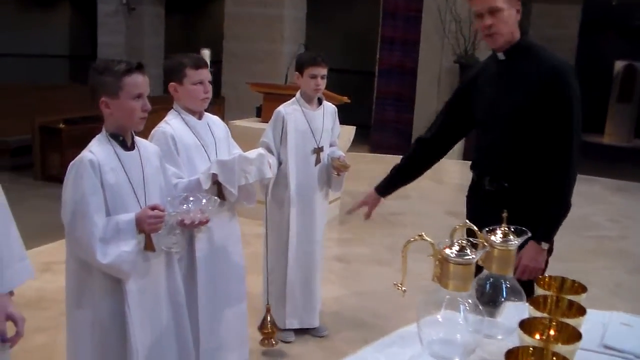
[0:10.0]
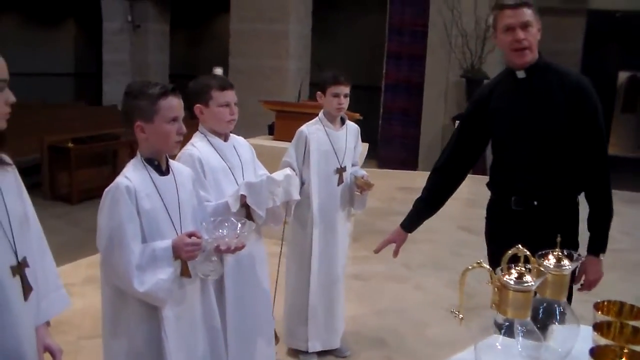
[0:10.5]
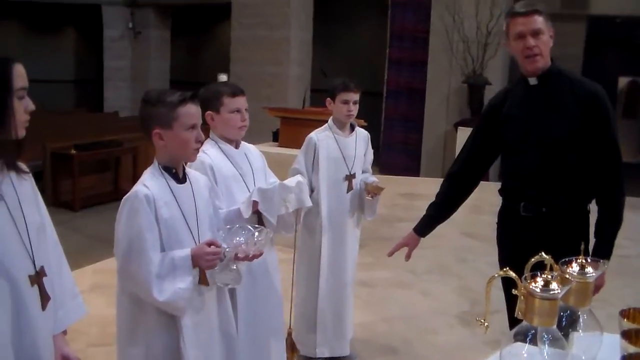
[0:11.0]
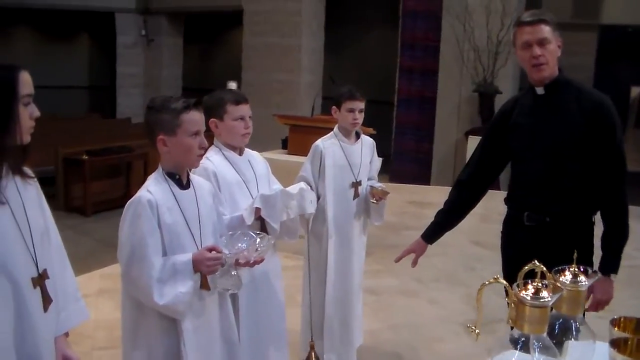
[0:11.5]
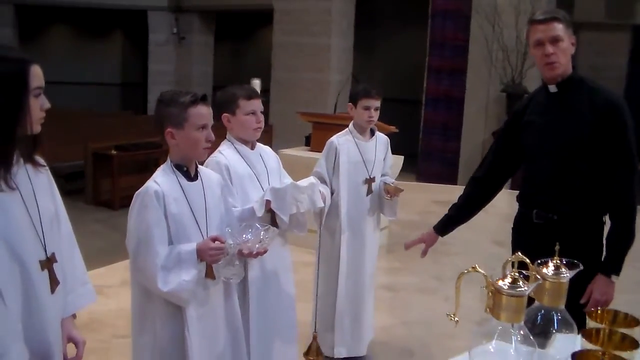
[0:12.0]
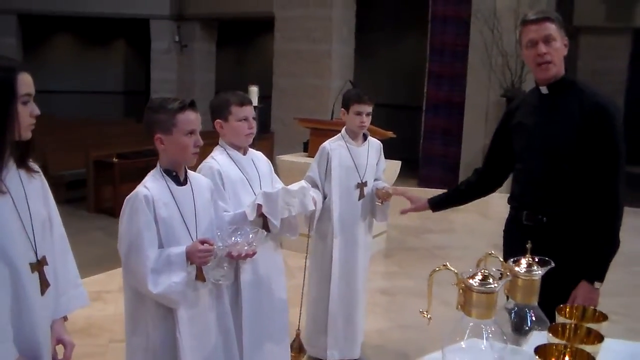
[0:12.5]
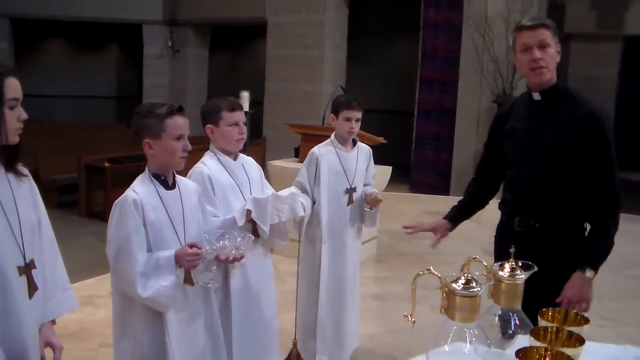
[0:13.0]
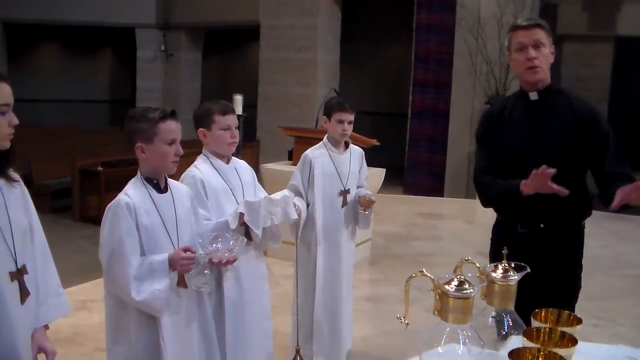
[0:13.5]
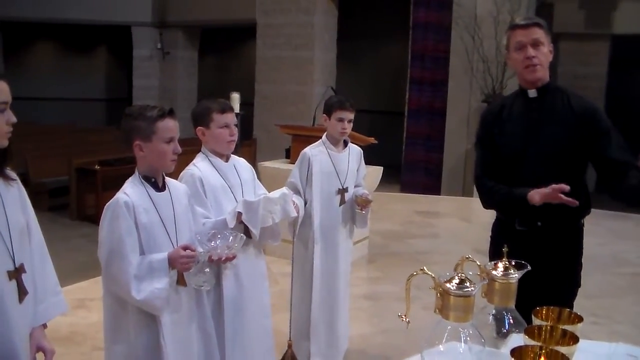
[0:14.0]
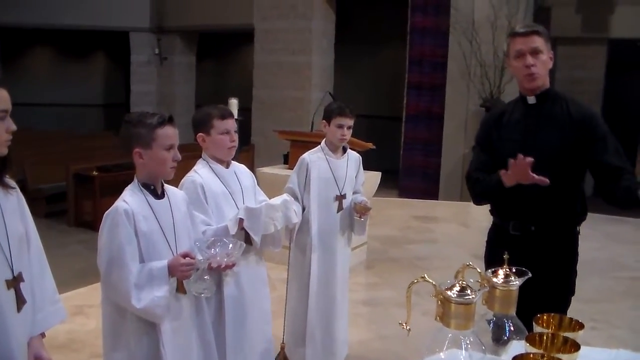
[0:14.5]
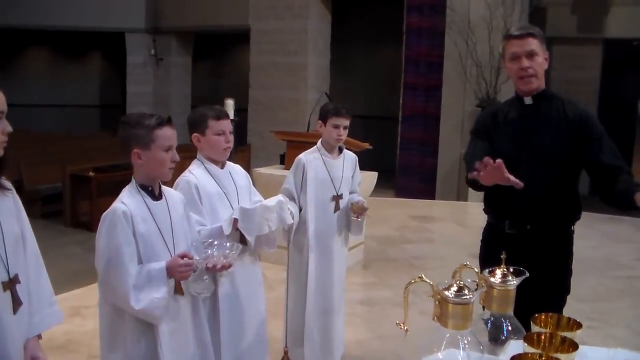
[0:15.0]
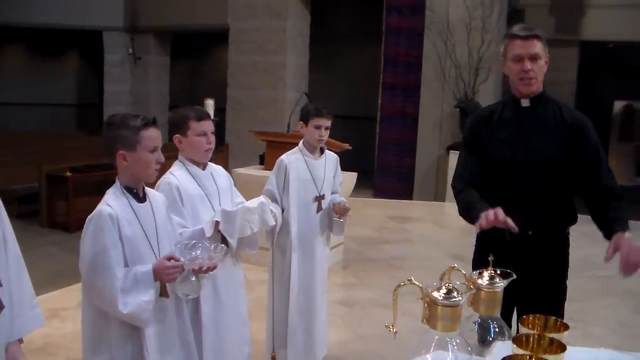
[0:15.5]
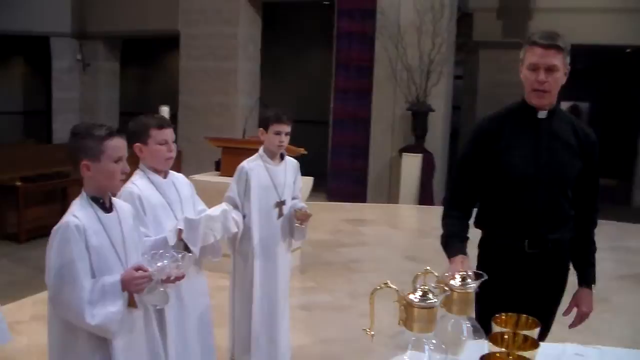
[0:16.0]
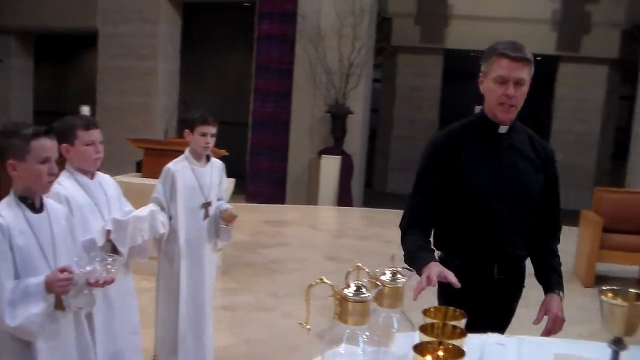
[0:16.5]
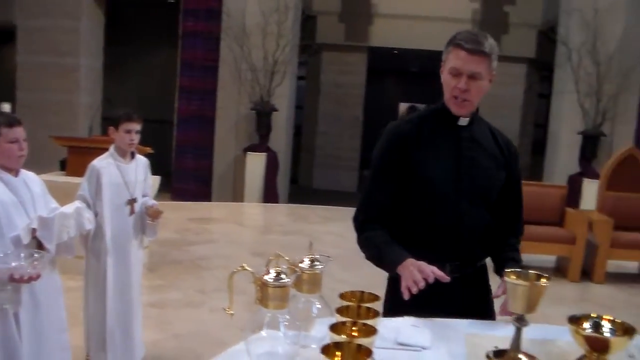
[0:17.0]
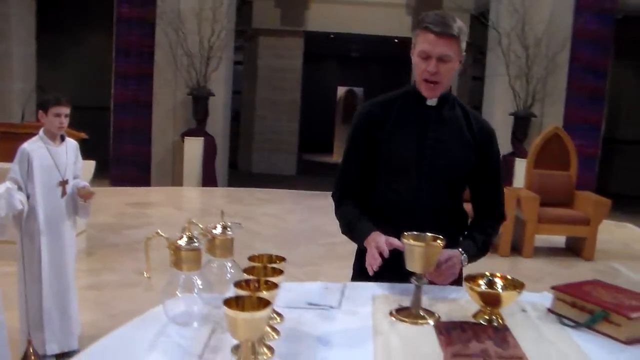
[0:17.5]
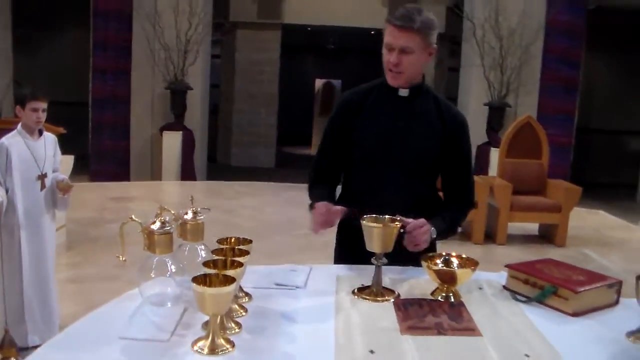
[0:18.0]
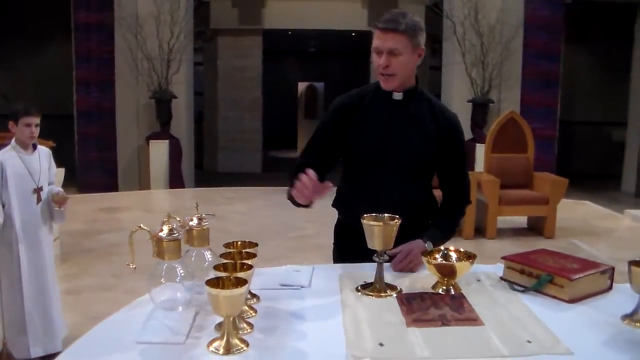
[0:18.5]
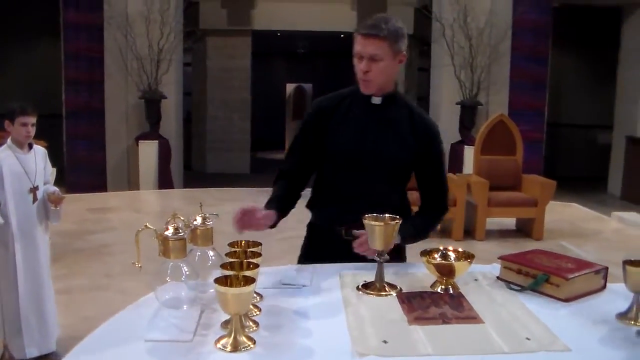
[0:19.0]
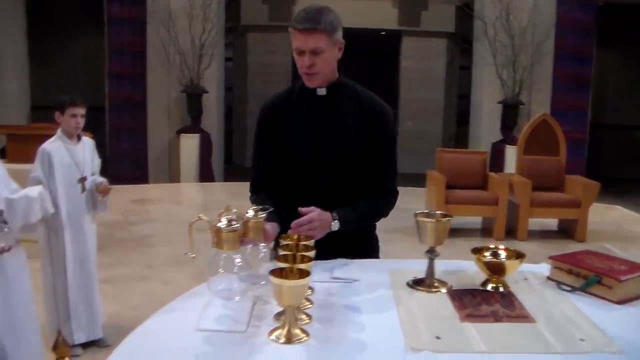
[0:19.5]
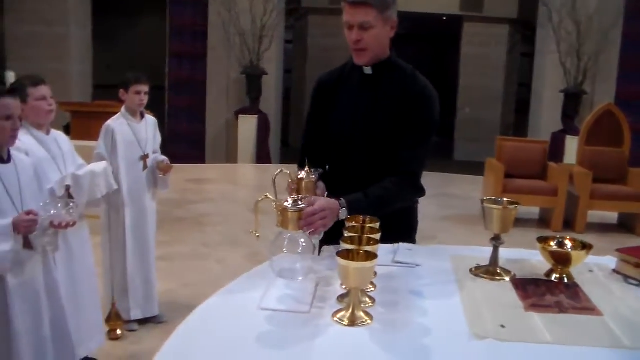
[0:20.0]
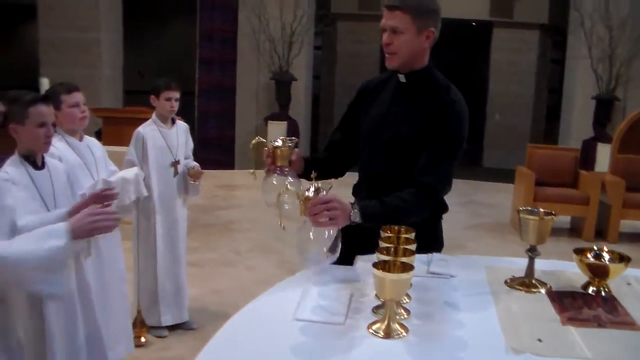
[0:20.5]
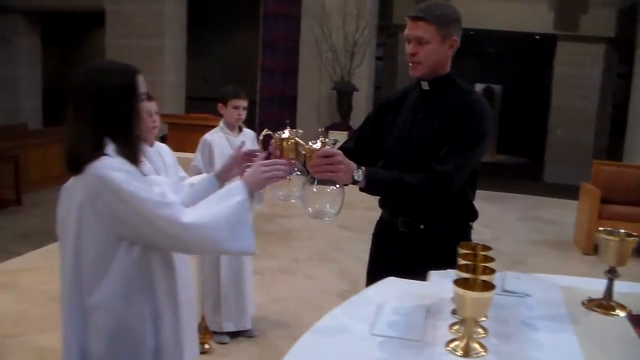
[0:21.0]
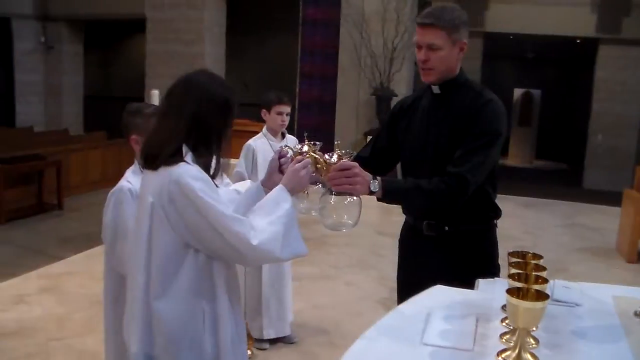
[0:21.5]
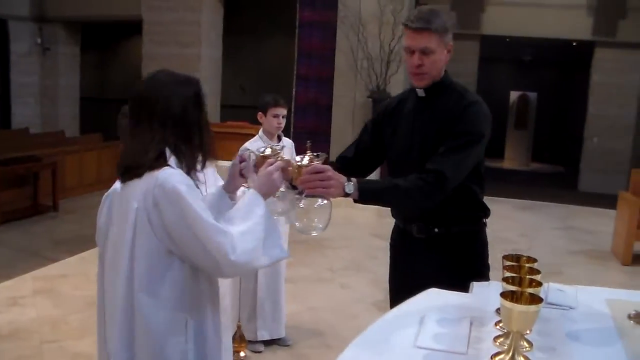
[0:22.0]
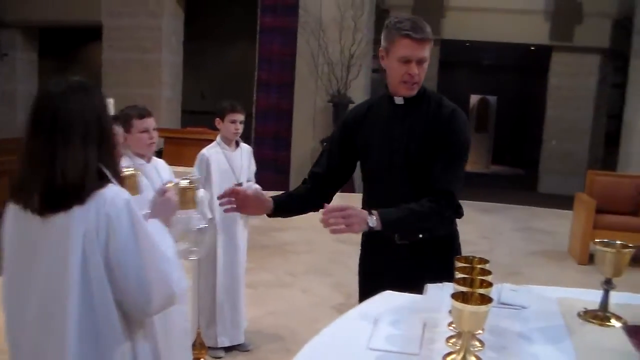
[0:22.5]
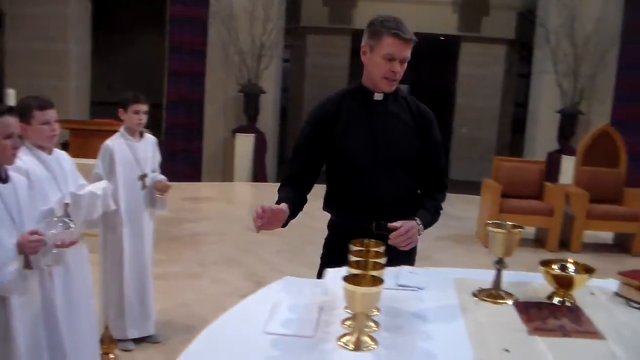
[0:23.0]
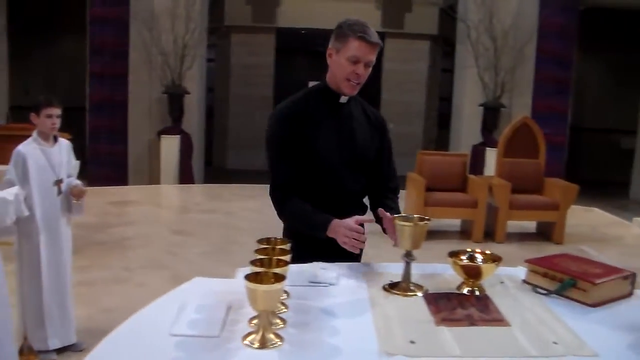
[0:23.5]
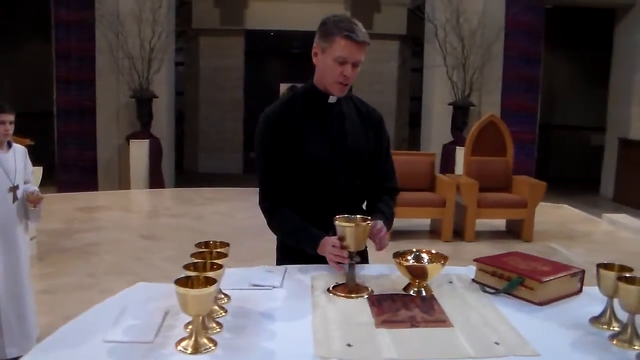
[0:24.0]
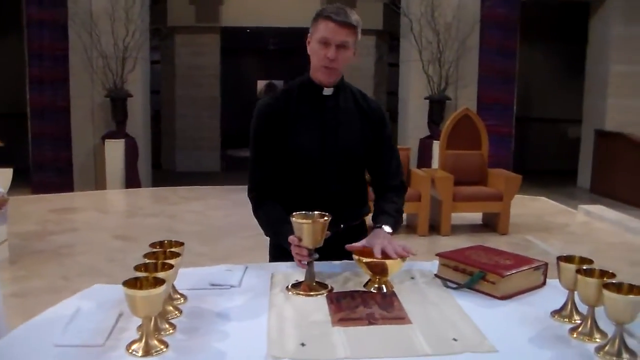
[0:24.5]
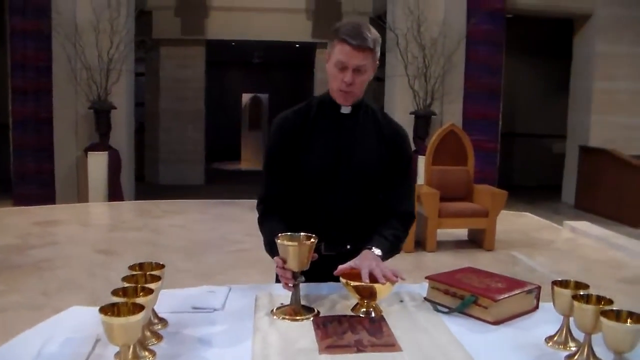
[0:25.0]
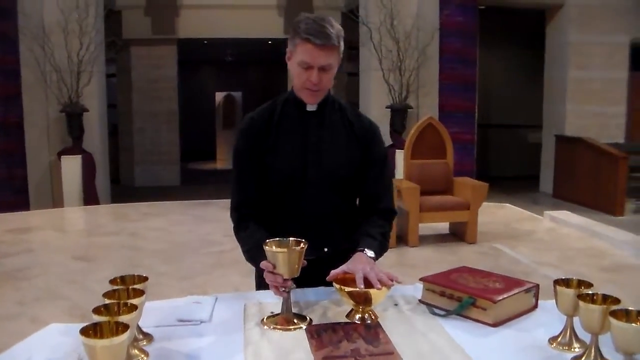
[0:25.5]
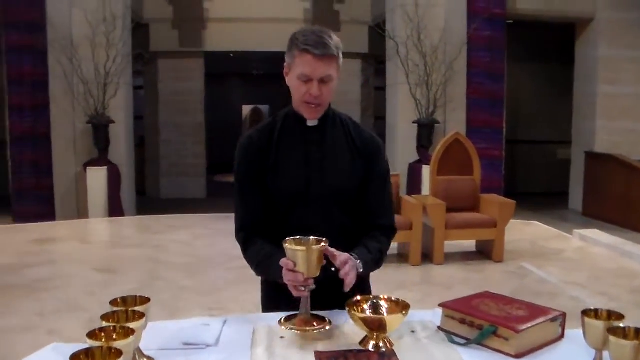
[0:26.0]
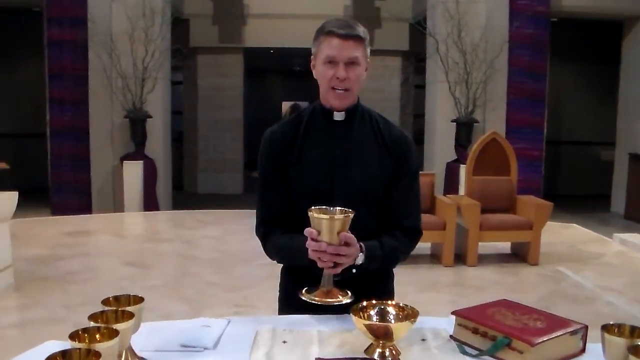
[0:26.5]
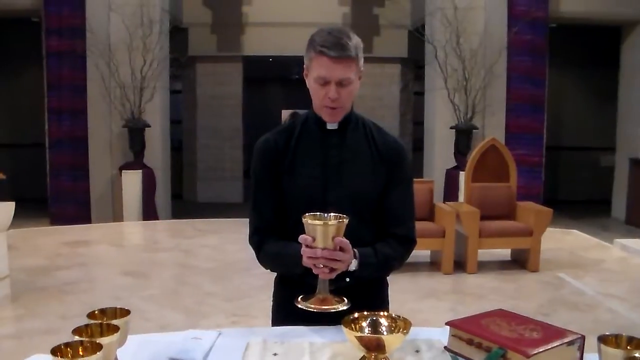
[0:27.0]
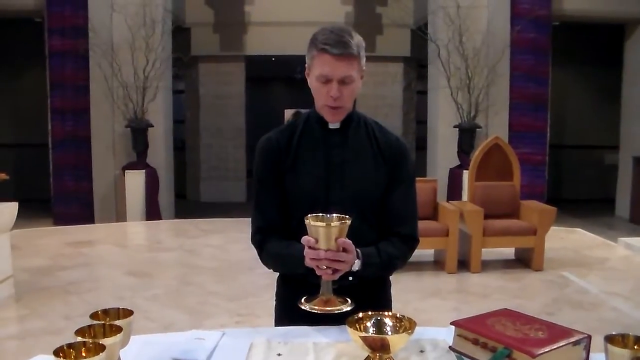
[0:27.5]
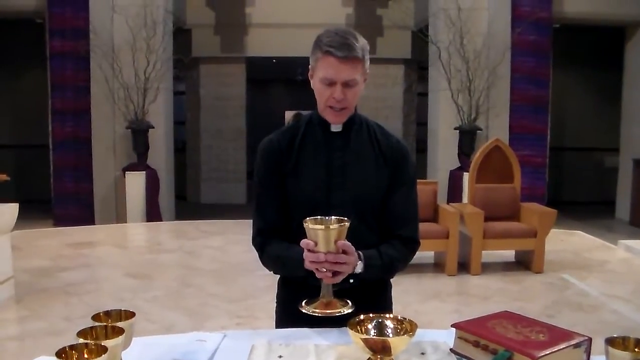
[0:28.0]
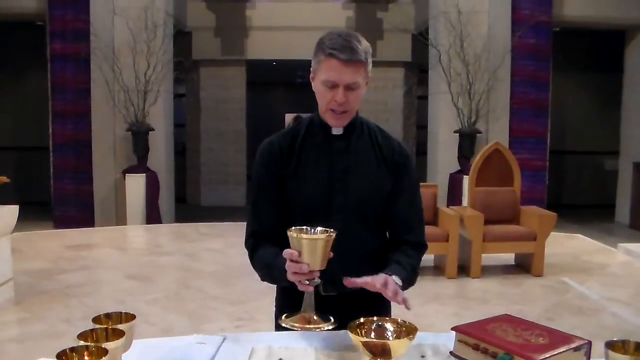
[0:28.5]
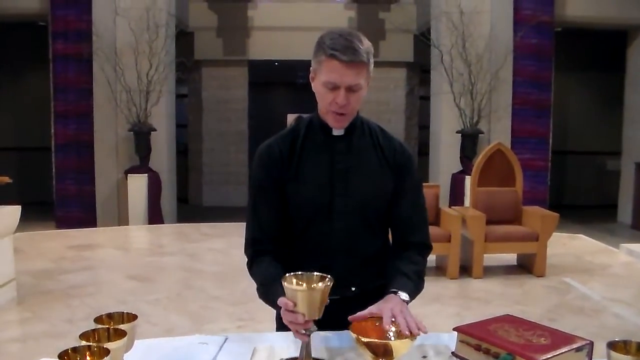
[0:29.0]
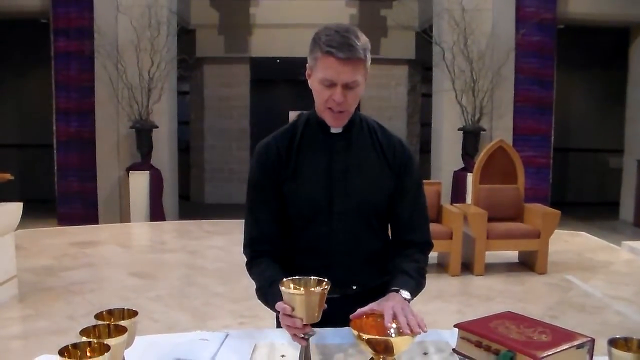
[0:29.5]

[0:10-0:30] The camera pans out, revealing a girl in addition to the three boys. She is slightly older or around the same age, roughly 13 or 14, while the boys are around 11 to 12. She wears a white gown with a cross on it. The priest turns back to his table, which is now seen in a wider view with other objects on it, including what looks to be a Bible and three more golden goblets used for Holy Communion wine. The priest hands two of the water pitchers to the girl, and she takes them off. He picks up one of the goblets and is seen speaking to the camera about it. He places his hand on one of the other chalices, which looks wider than the others, and picks up one of the goblets, holding it with both hands and looking down at it before placing it back down on the table.